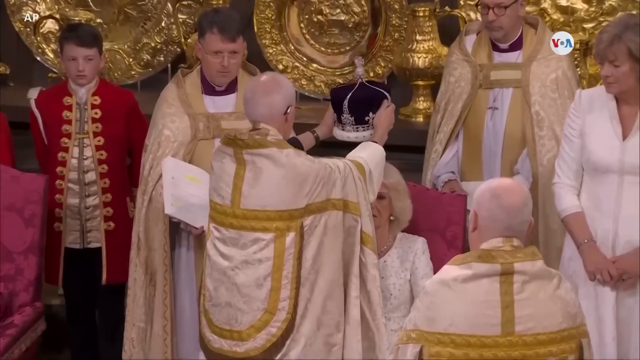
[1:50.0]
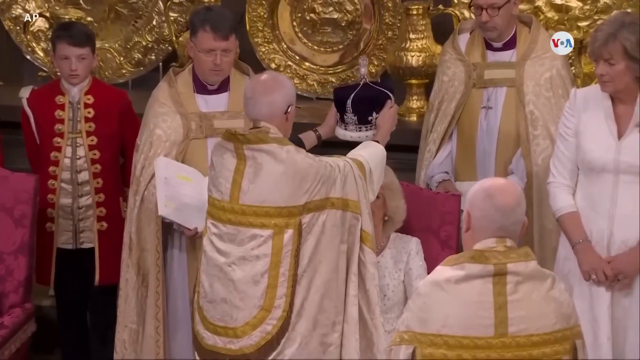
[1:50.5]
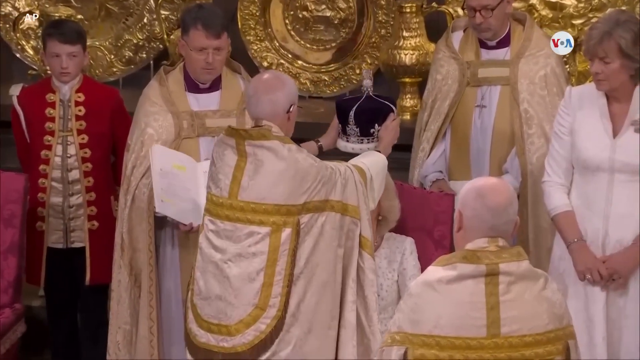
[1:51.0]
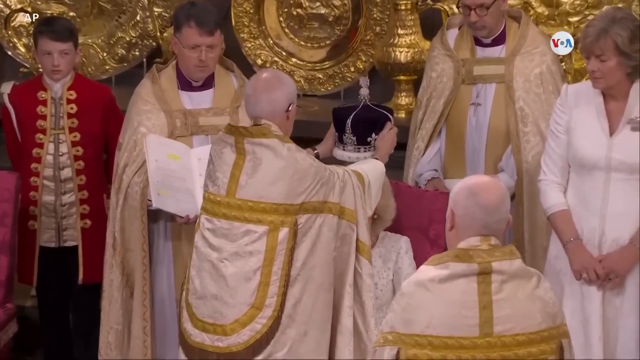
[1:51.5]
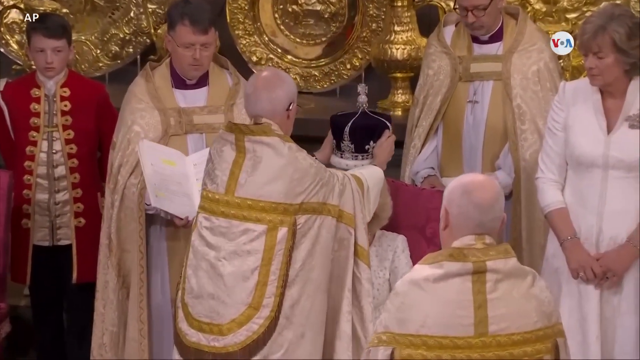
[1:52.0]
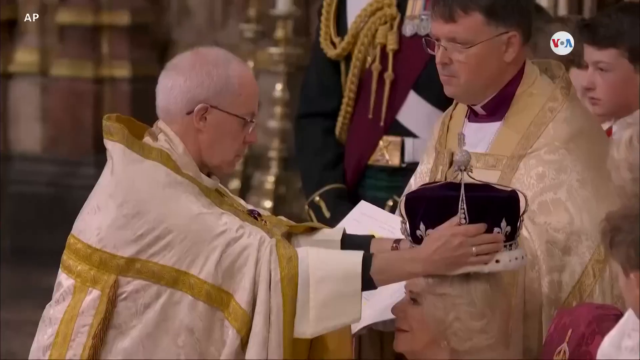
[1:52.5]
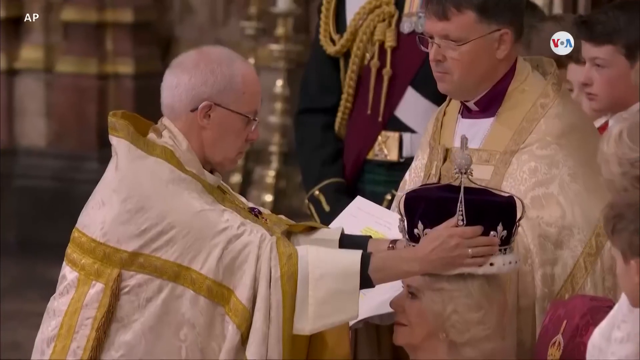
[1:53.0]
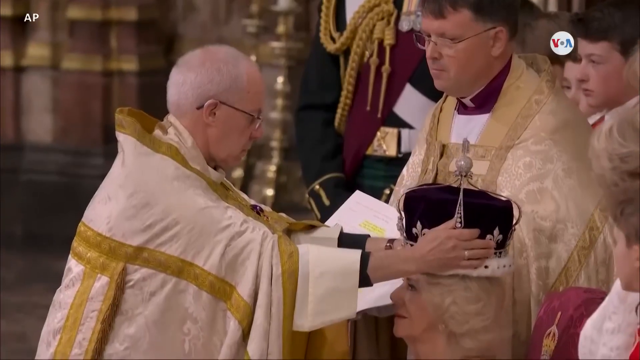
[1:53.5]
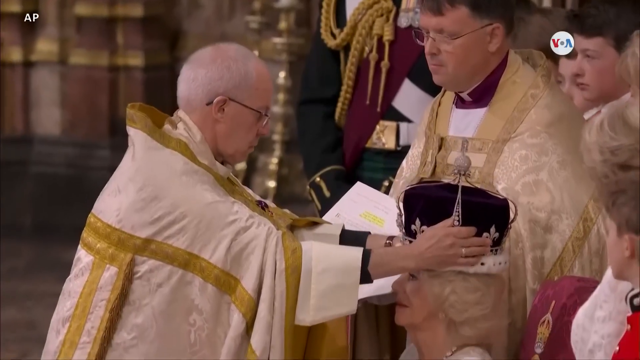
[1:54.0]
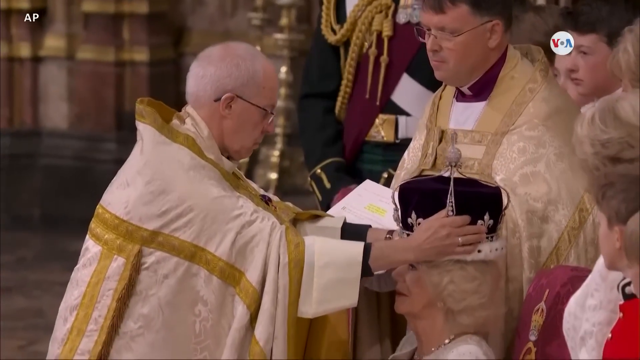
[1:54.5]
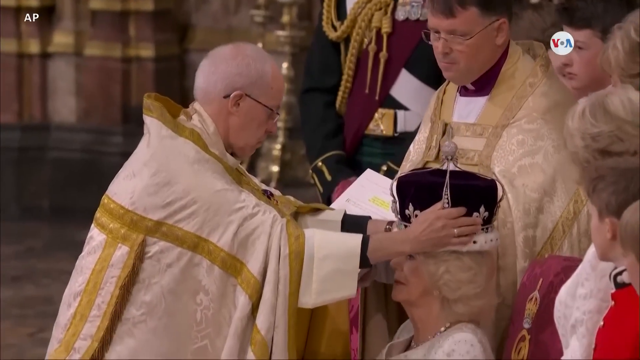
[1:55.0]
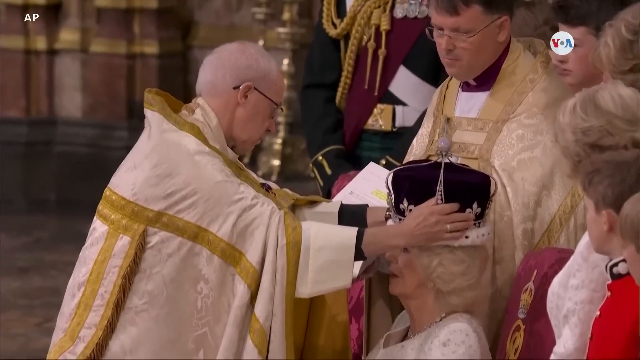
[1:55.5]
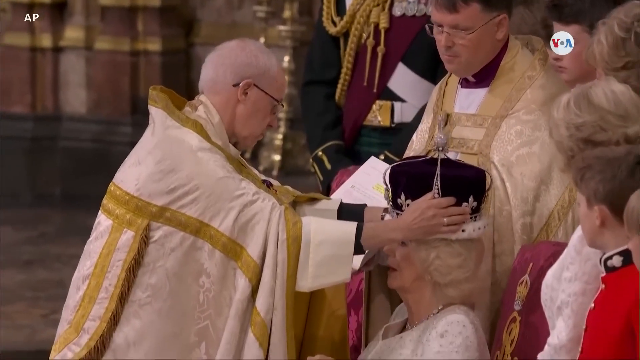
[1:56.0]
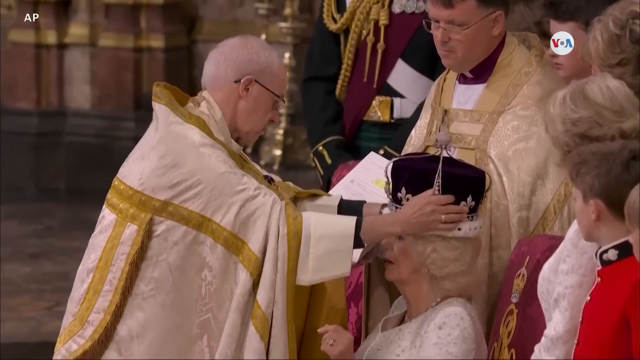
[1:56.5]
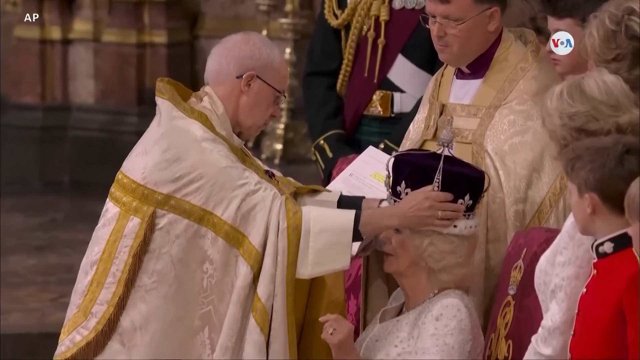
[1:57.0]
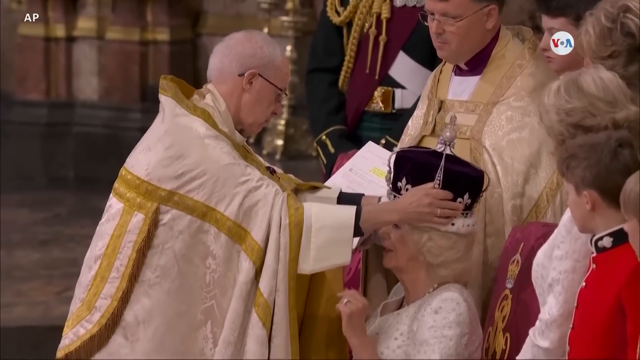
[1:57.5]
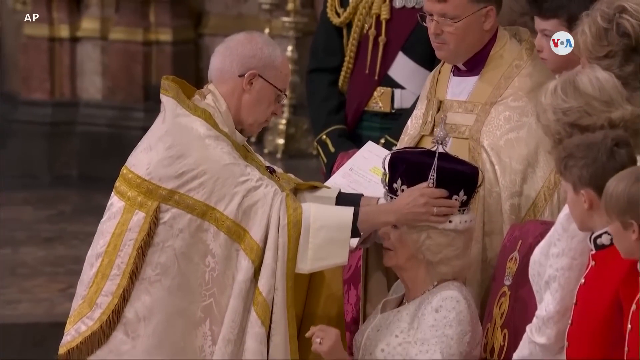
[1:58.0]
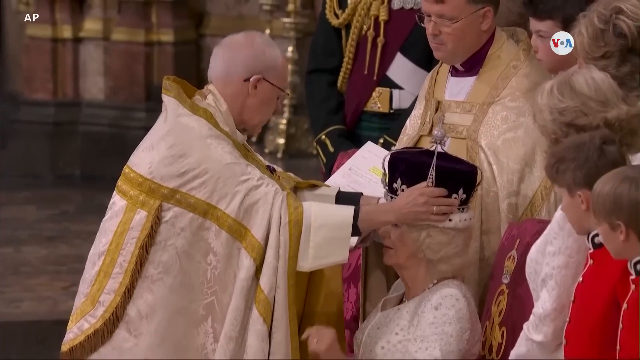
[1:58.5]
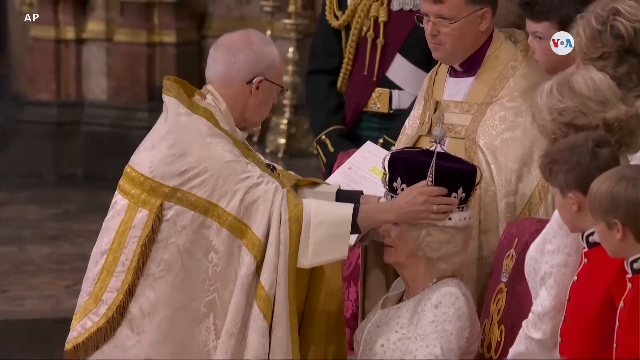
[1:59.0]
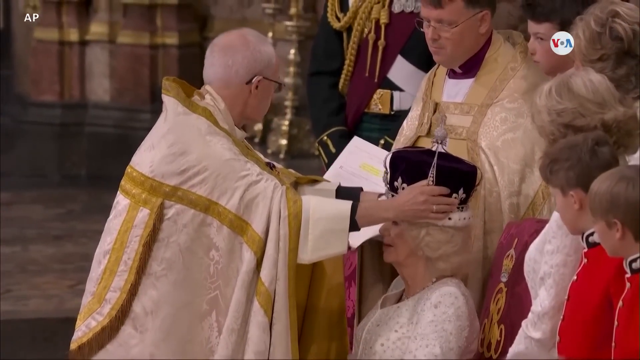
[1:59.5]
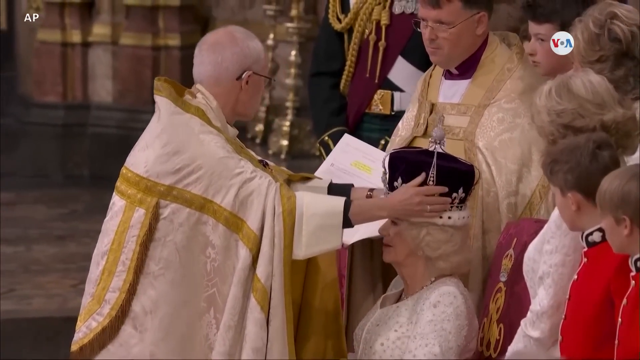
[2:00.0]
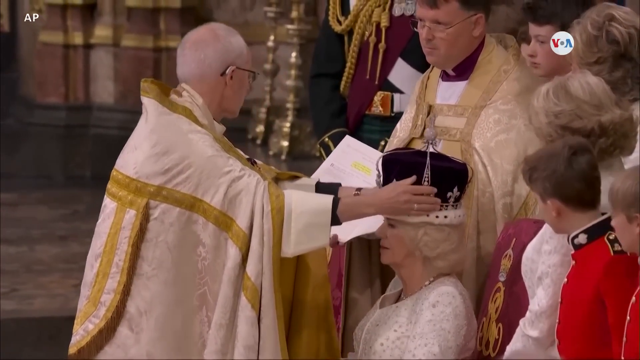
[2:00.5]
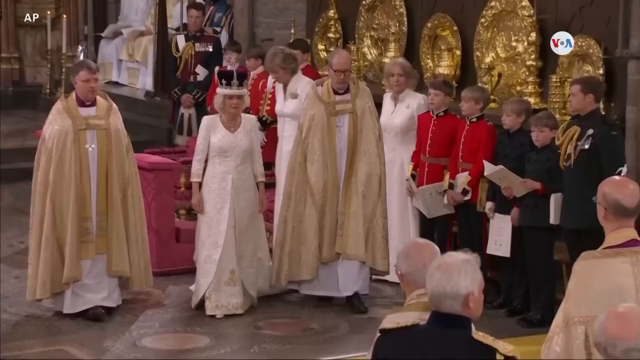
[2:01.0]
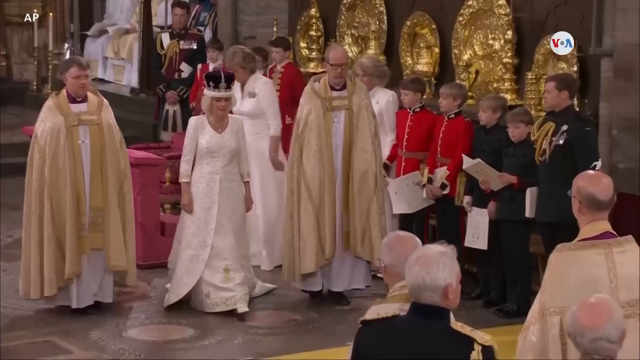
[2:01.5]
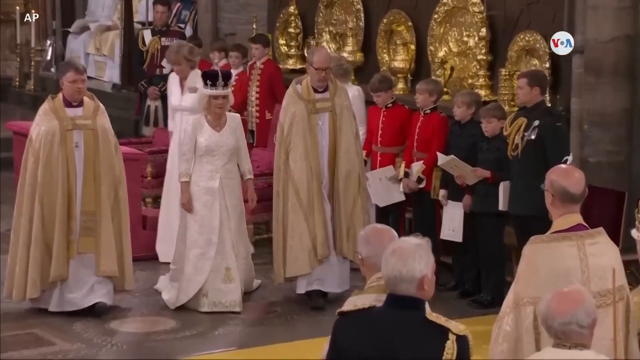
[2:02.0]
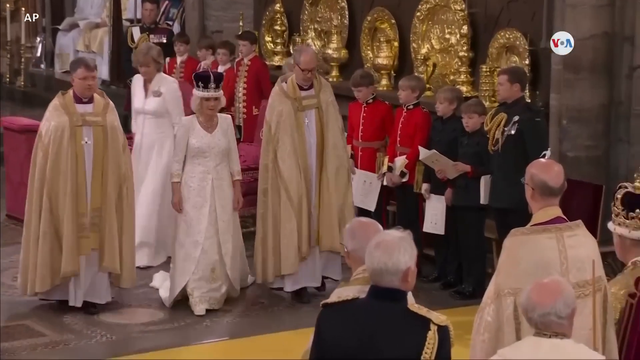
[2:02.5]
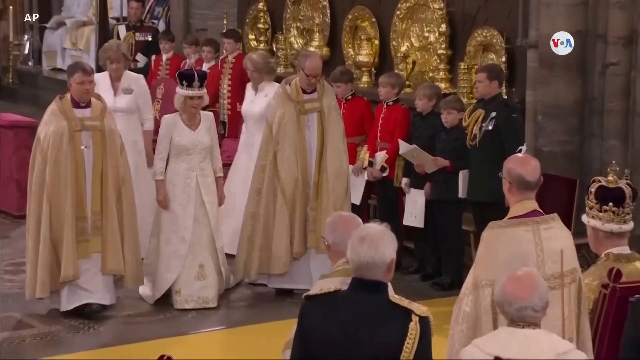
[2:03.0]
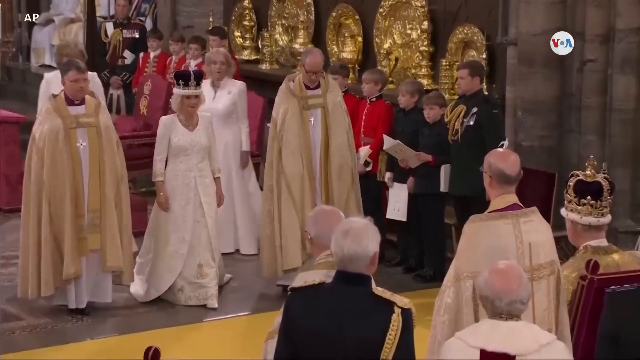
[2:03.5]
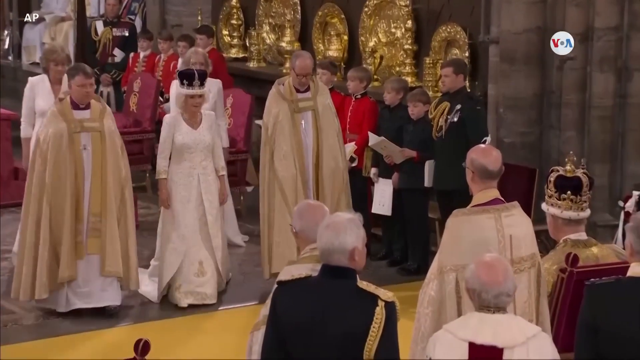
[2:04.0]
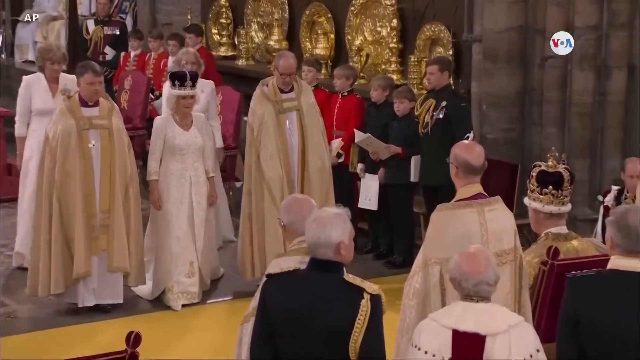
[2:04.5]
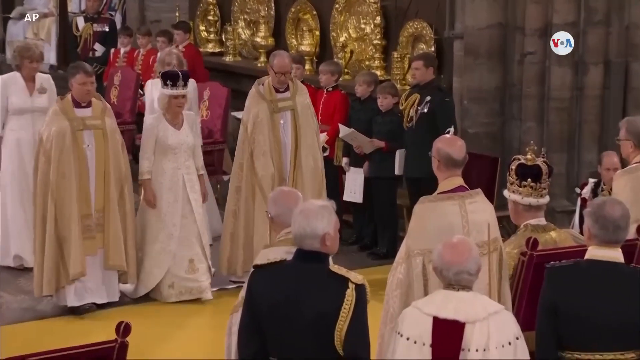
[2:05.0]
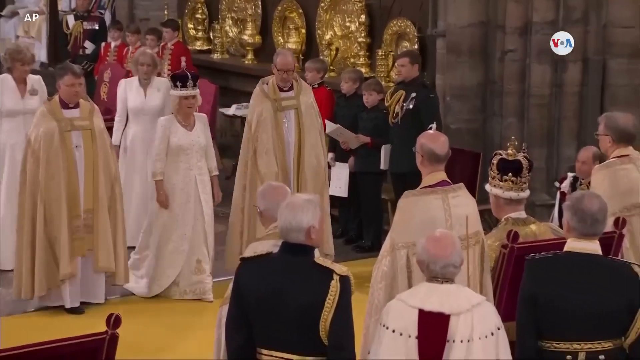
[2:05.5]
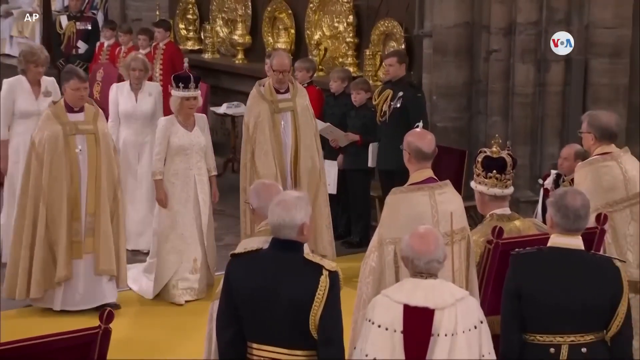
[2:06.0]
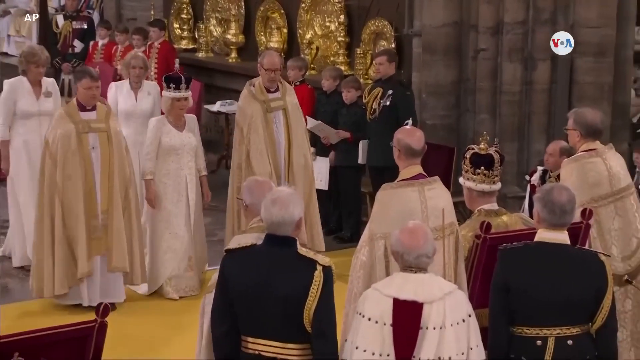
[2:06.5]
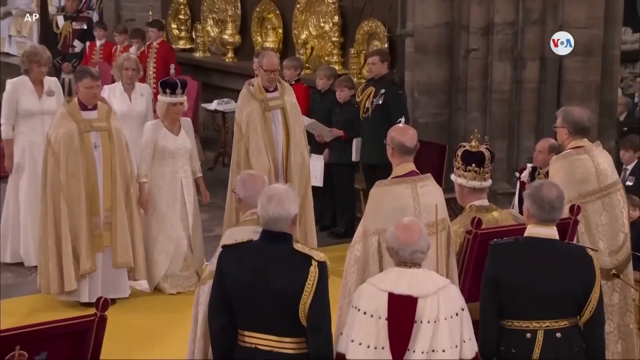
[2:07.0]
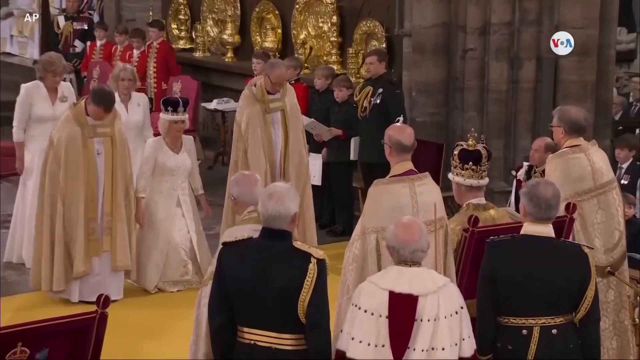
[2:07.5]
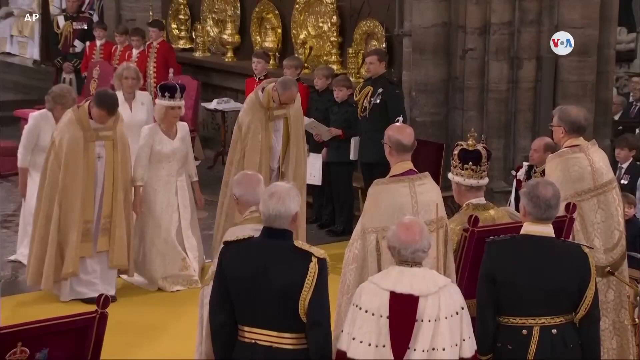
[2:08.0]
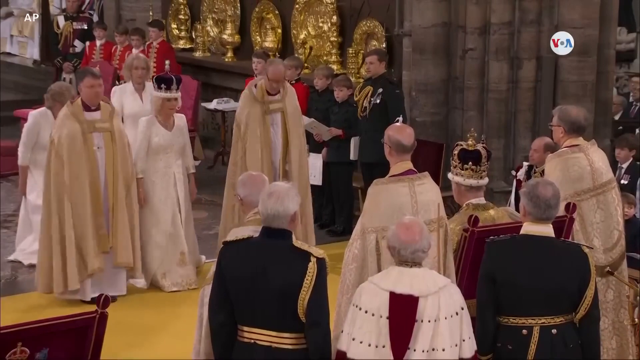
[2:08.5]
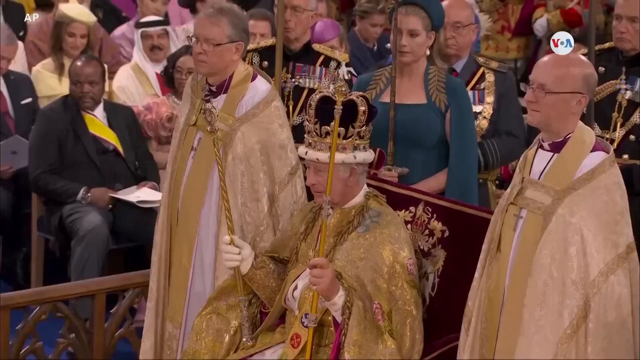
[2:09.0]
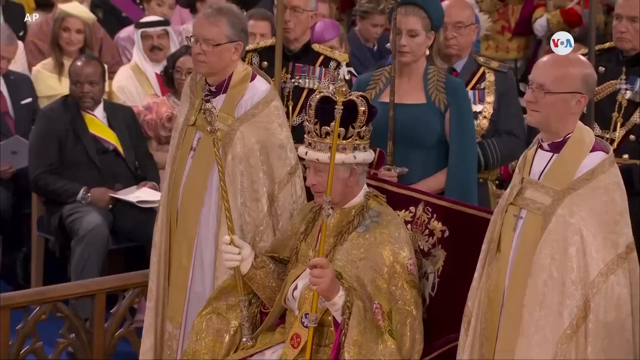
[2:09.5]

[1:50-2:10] Queen Camilla sits on a pink seat, perhaps a traditional throne, as a man places a crown on her head. The crown is very purple, with different symbols around it, a silver and jewelled design, and some sort of jewel at the top. Behind her are a couple of women dressed in white, in the same white dress she is wearing. To their left are two boys in what looks like a sort of military uniform, red with black on the sleeves and black collars, and to their left two more boys in an all-black uniform with red on the sleeves. The Queen stands up from her pink throne and walks with the crown on her head, flanked by the two men who put the crown on her, followed by two women in the same white dress. They reach a yellow carpet and all bow to King Charles, who sits on a red seat, presumably a throne, wearing his gold and purple crown and a gold cloak around his shoulders, holding two gold rods. He is flanked by two men in sandy-coloured cloaks over white uniforms, and a number of people around them wear mostly black, with some other colours mixed in.